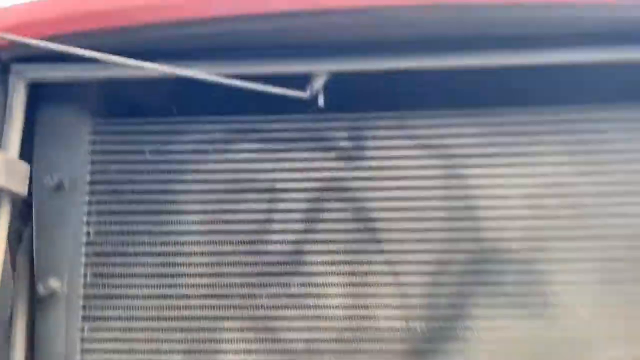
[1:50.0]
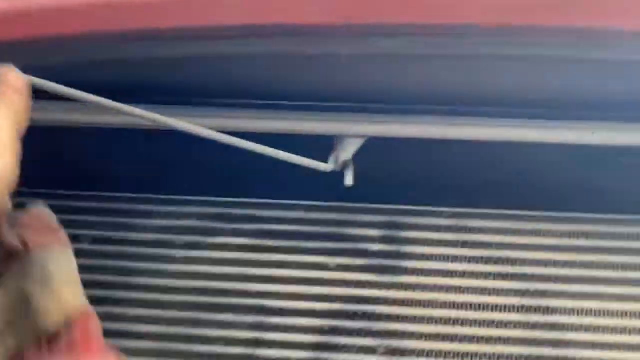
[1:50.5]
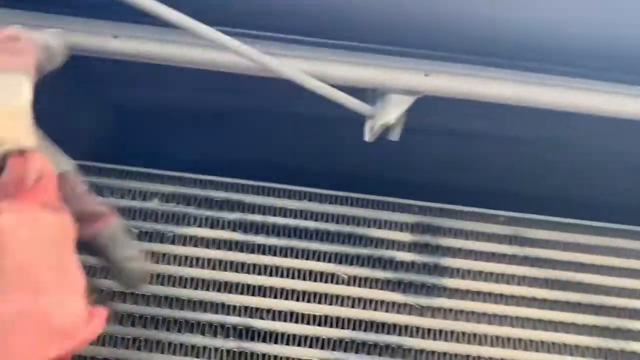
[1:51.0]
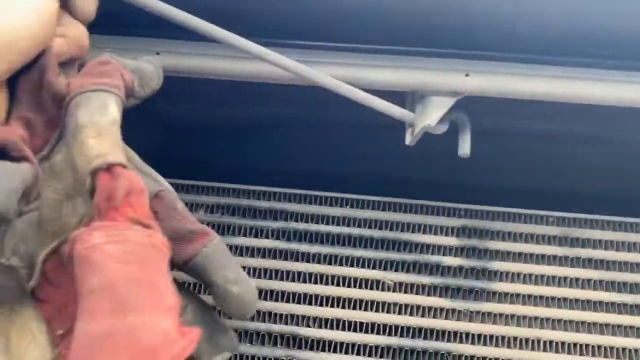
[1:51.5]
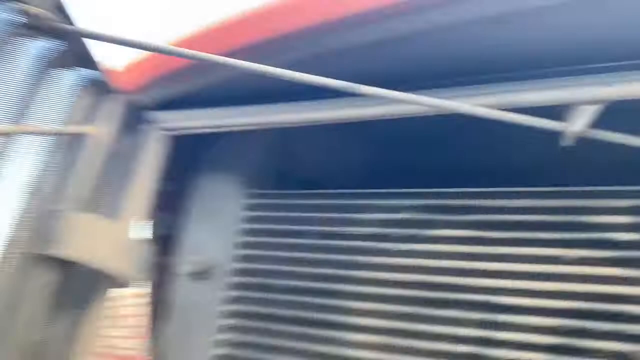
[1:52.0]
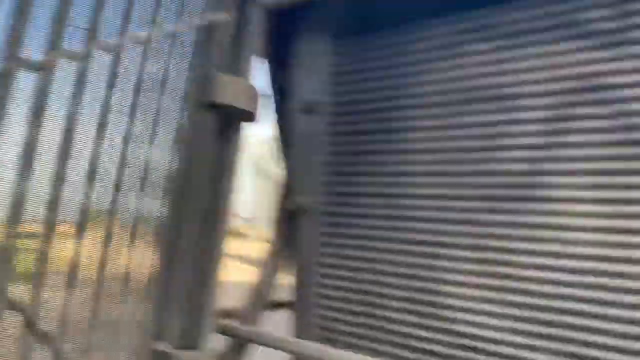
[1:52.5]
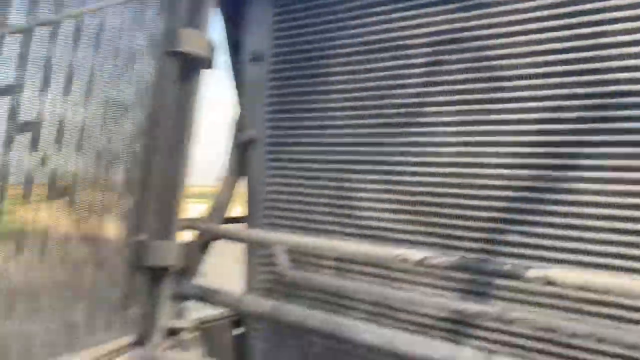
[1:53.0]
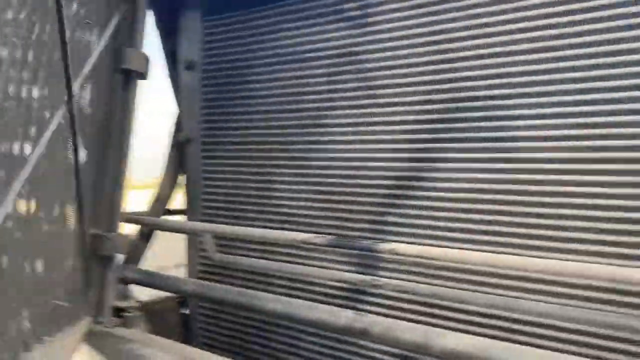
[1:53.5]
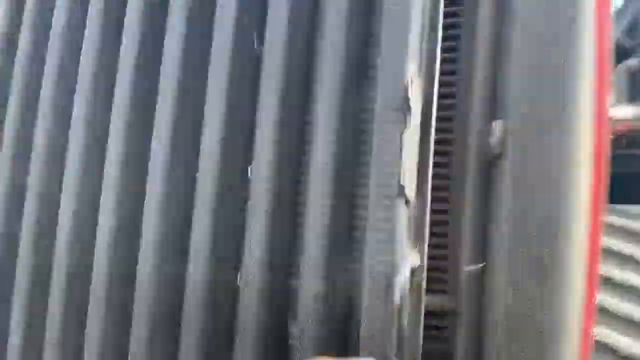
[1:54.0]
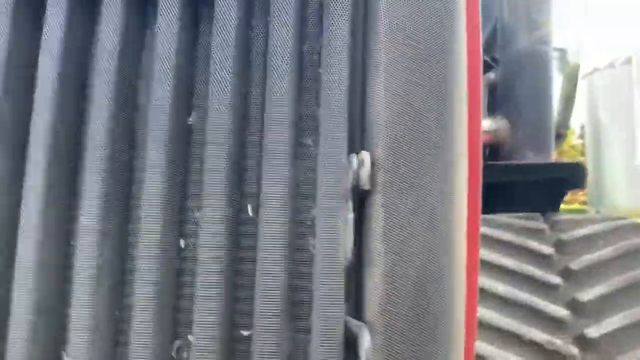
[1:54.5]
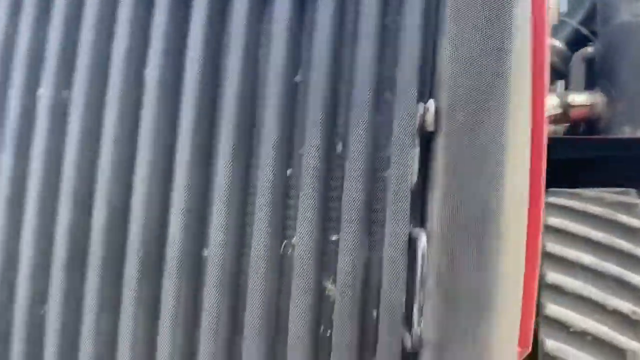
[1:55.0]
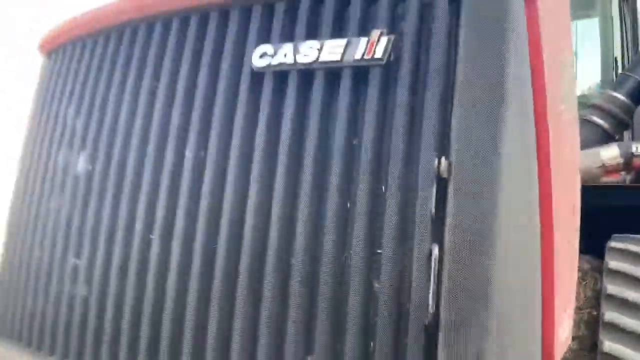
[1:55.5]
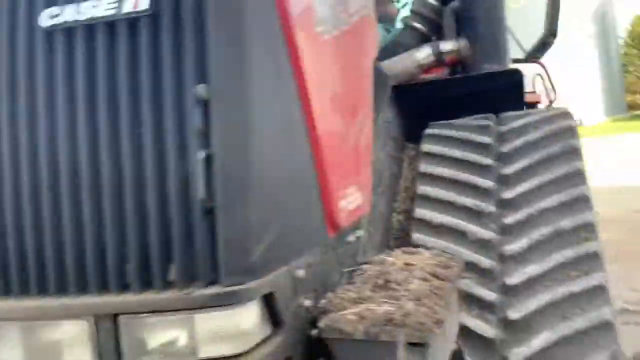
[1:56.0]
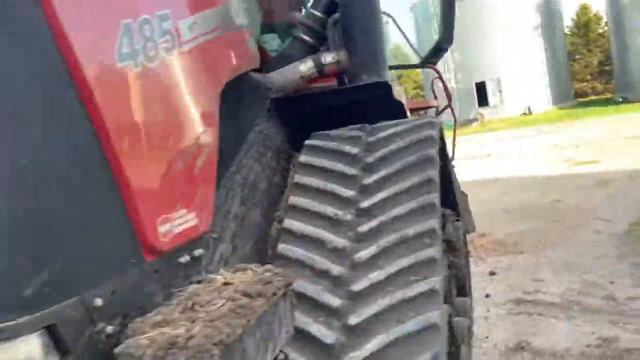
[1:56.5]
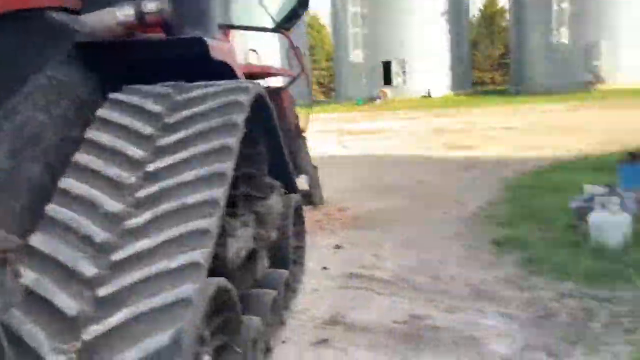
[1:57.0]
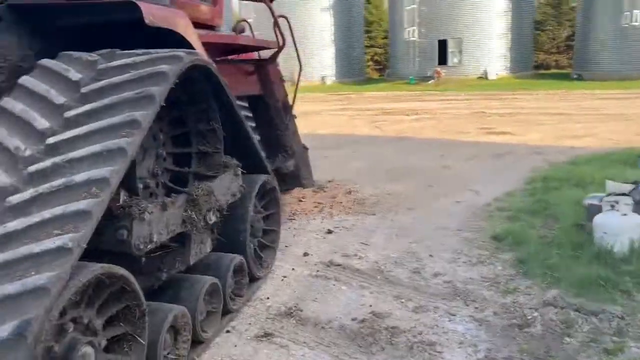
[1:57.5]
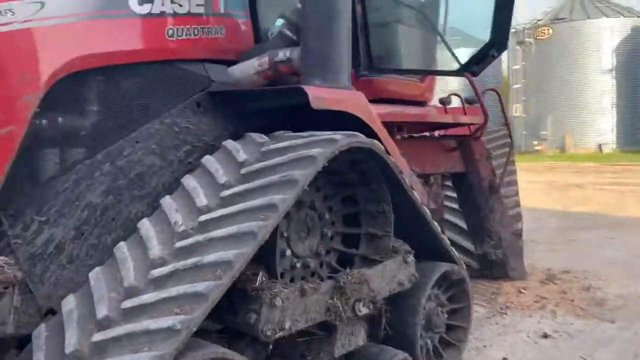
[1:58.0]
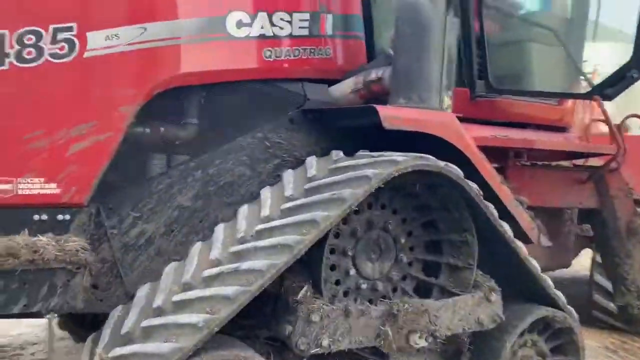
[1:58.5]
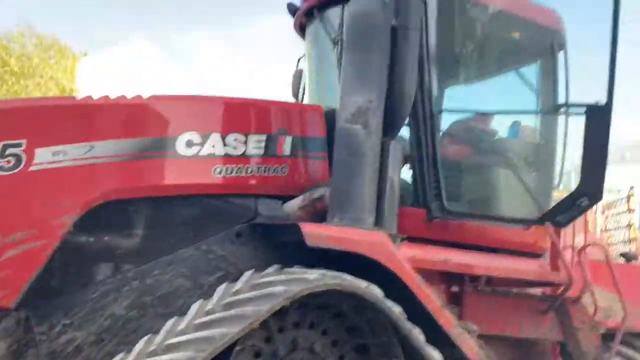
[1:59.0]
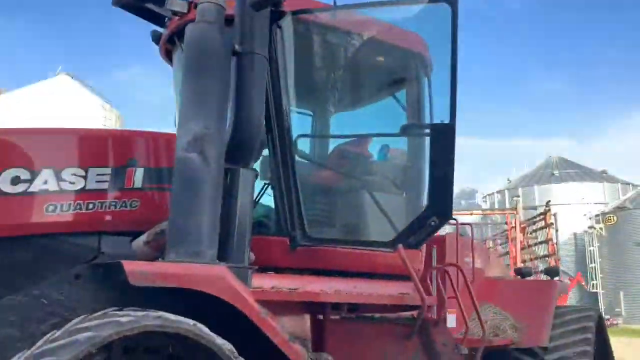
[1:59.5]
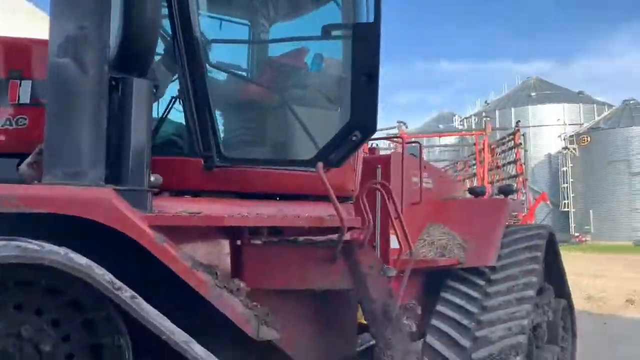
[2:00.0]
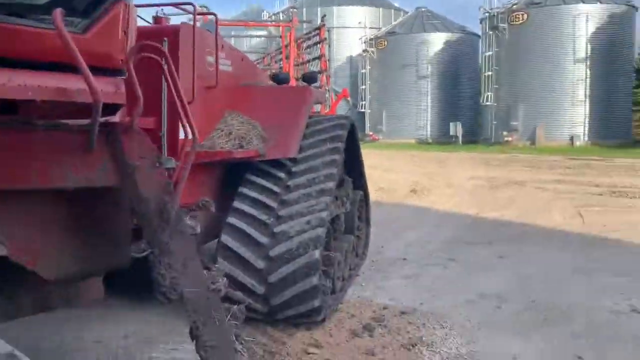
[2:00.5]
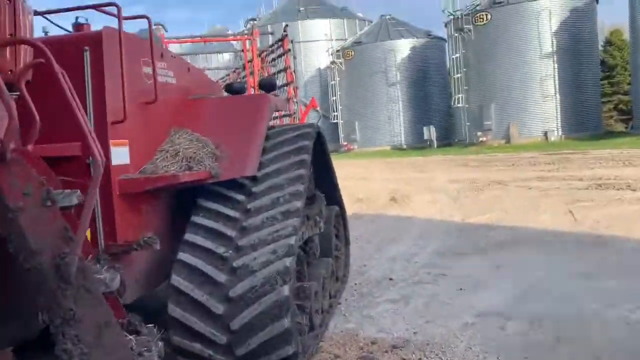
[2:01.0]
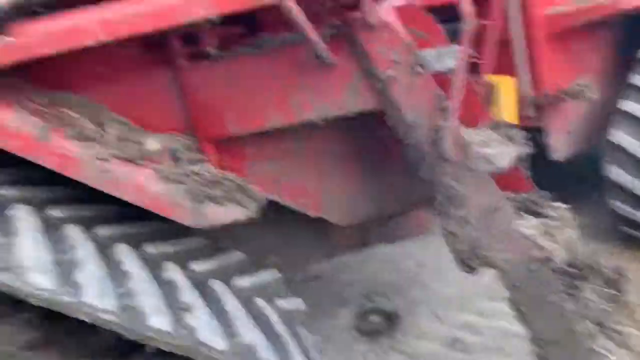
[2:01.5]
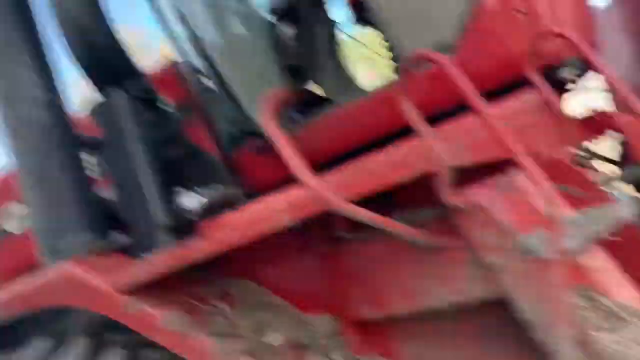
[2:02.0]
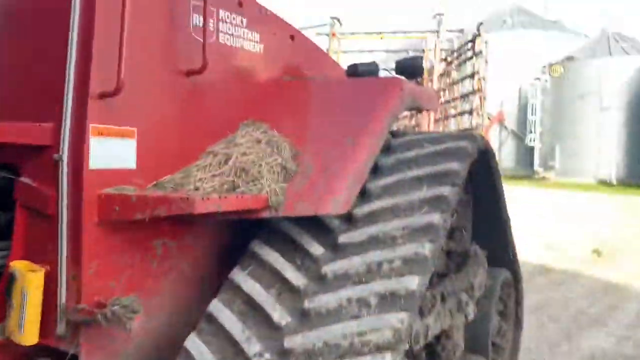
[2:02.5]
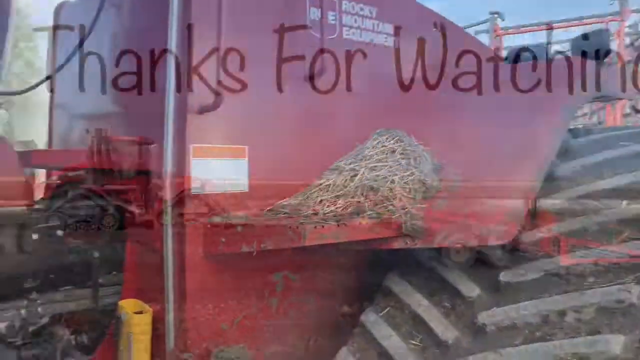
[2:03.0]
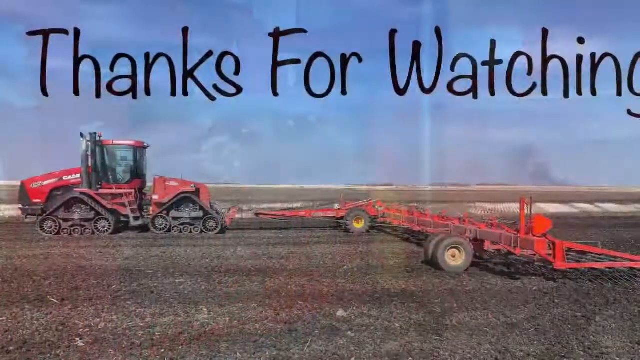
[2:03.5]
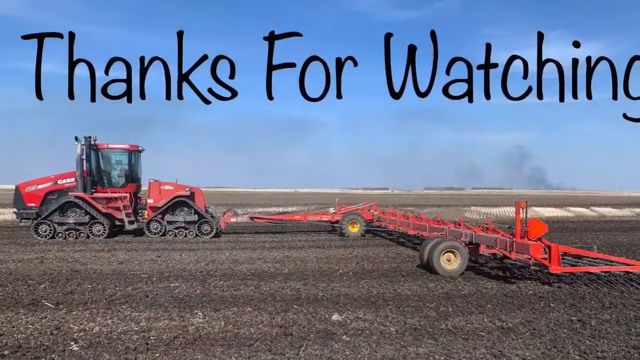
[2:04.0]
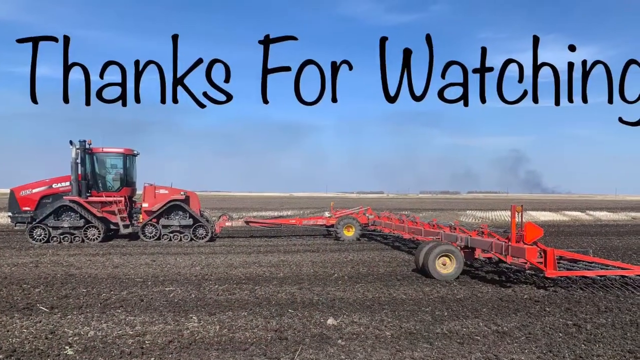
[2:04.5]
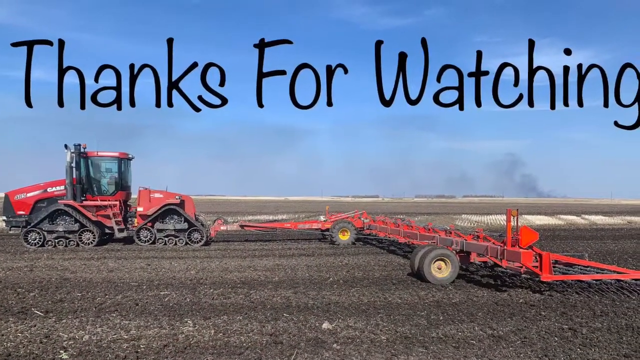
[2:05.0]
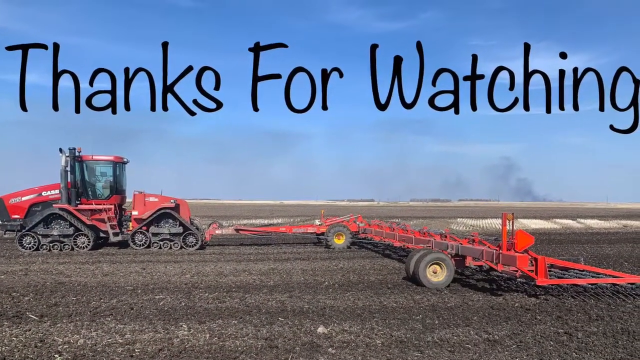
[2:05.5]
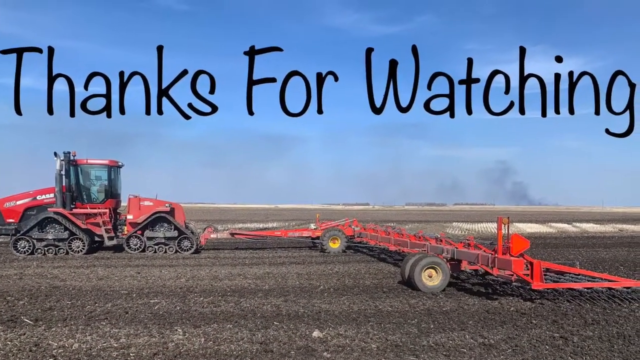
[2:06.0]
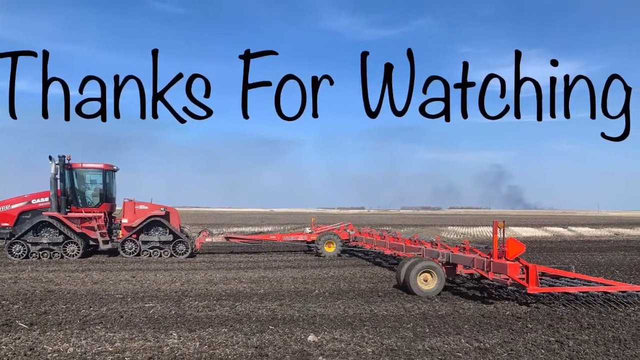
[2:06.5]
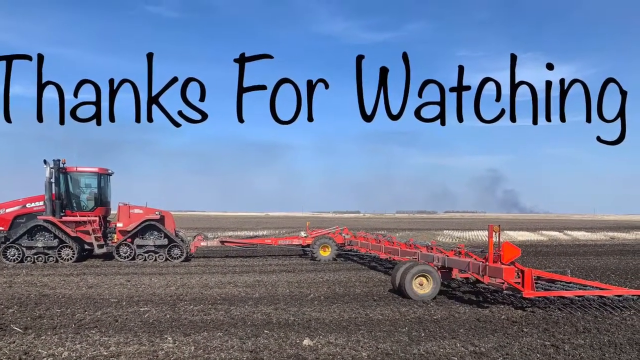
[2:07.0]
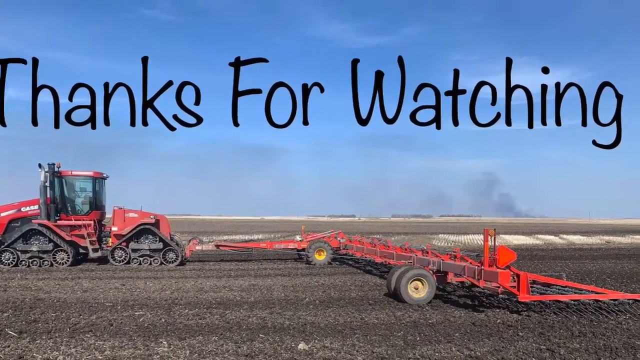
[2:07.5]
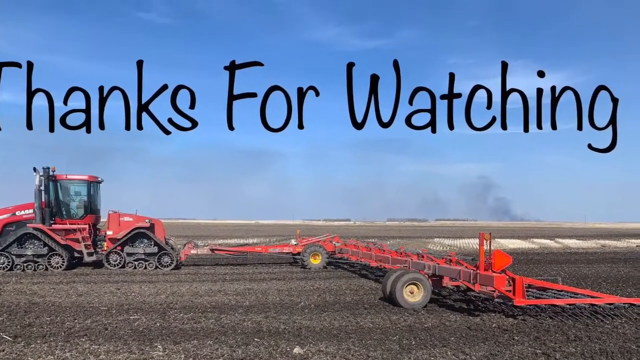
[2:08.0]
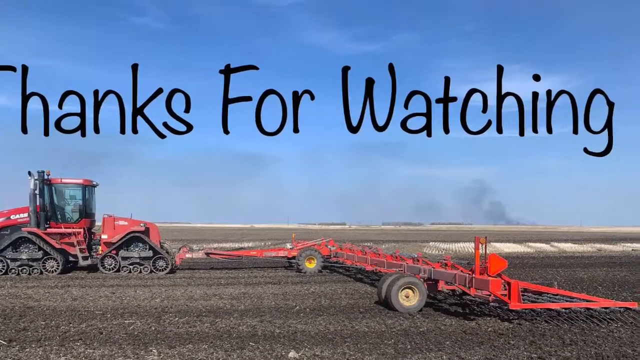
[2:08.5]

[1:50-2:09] The man's hand goes to the left corner, adjusts something on top of the front part of the tractor, and shuts the door of the front part, which is now closed. A small glimpse of the closed front side of the tractor is visible. The man walks toward the tractor, perhaps to step back into it. The scene changes to show the full tractor from its left side on a farm; behind it, the tractor is pulling some sort of large farming equipment with wheels. At the top, the words "thanks for watching" appear. The tractor is black and red.